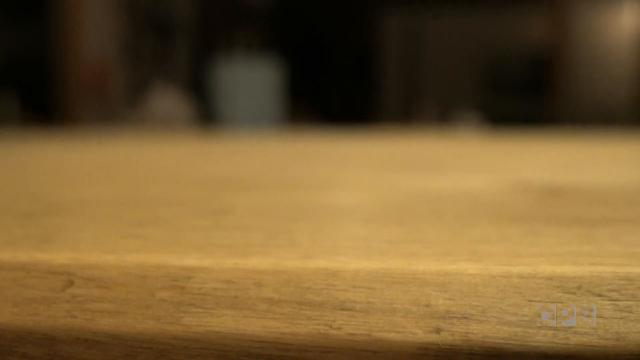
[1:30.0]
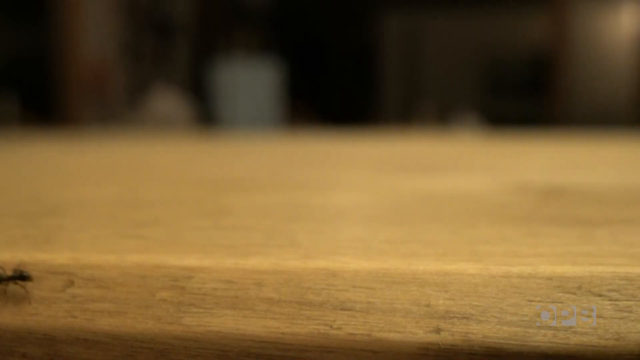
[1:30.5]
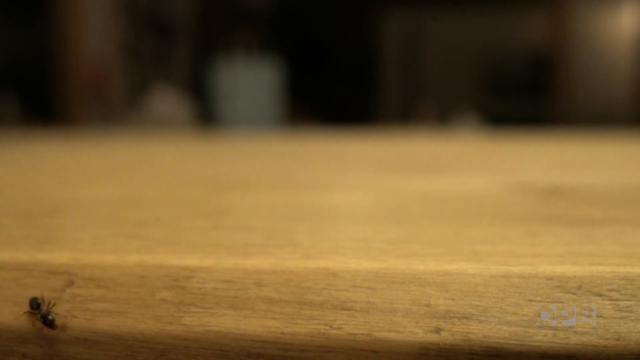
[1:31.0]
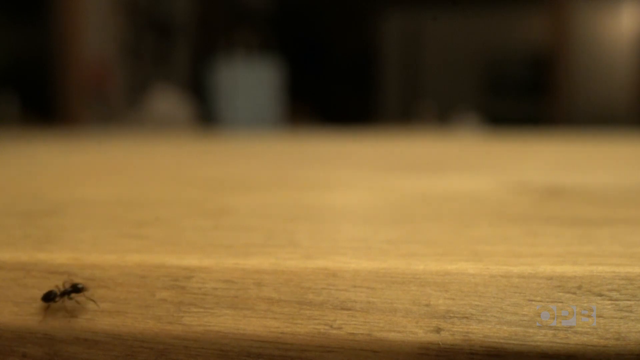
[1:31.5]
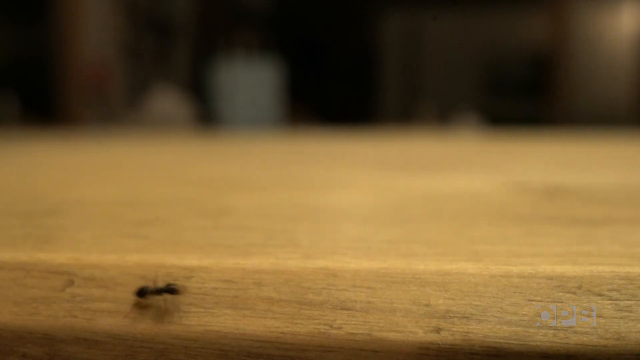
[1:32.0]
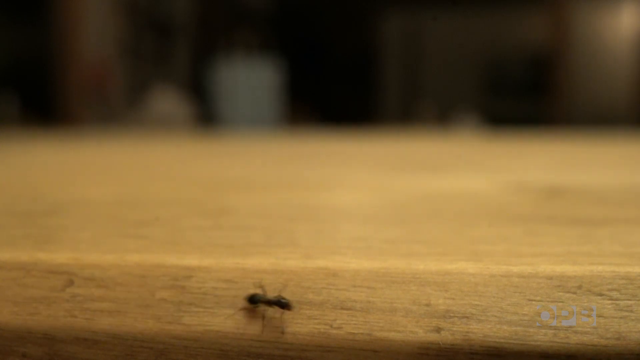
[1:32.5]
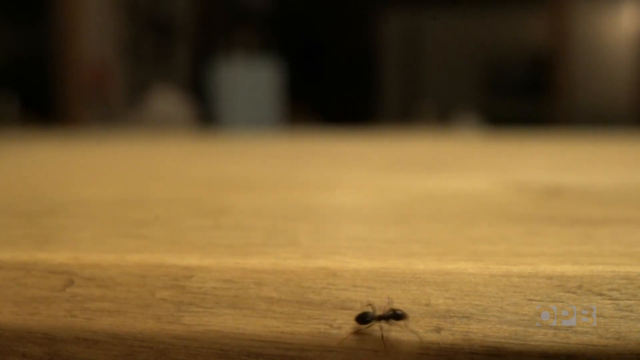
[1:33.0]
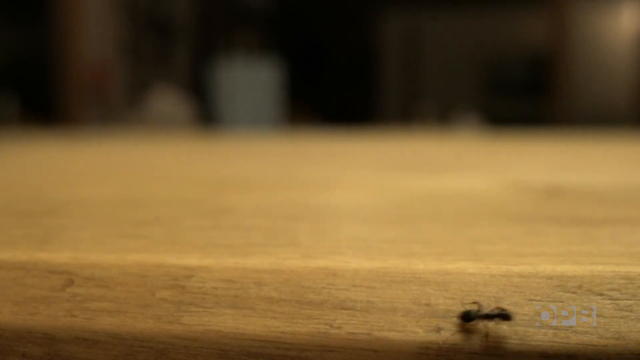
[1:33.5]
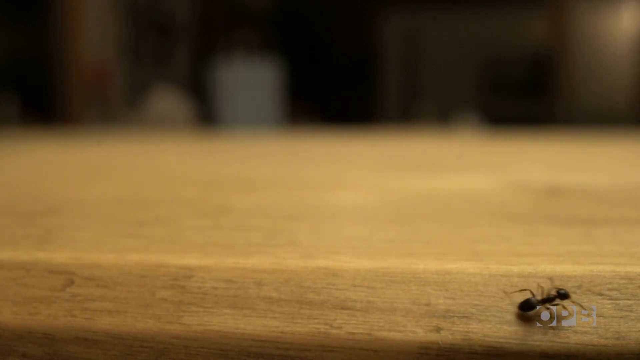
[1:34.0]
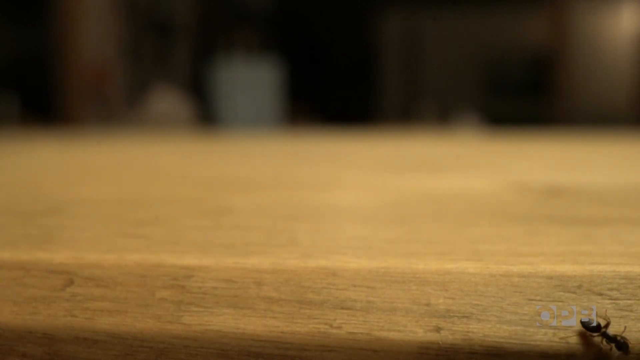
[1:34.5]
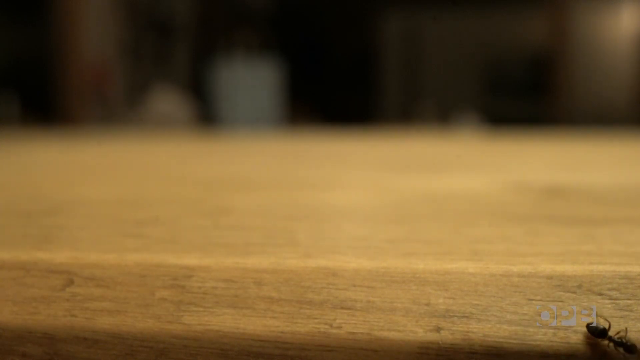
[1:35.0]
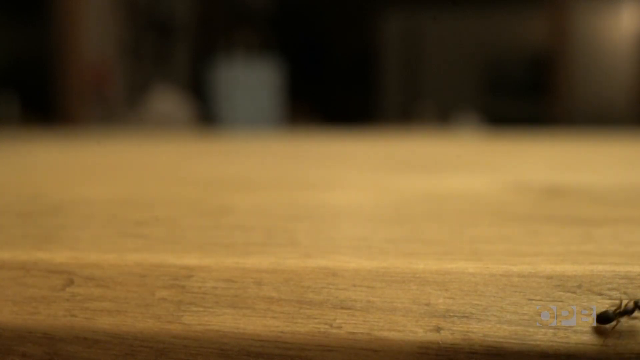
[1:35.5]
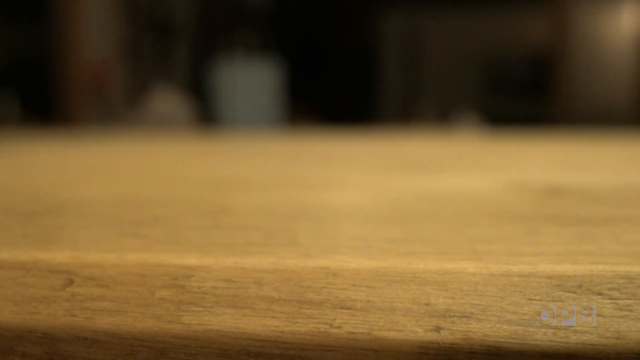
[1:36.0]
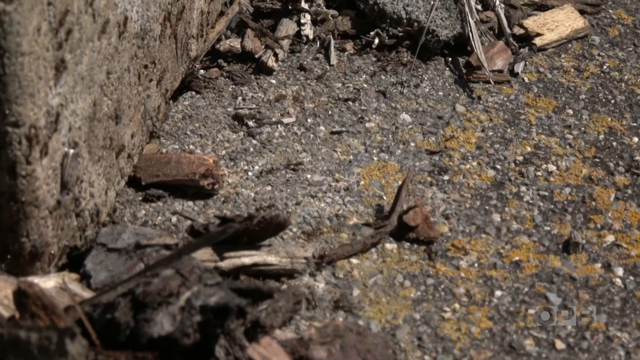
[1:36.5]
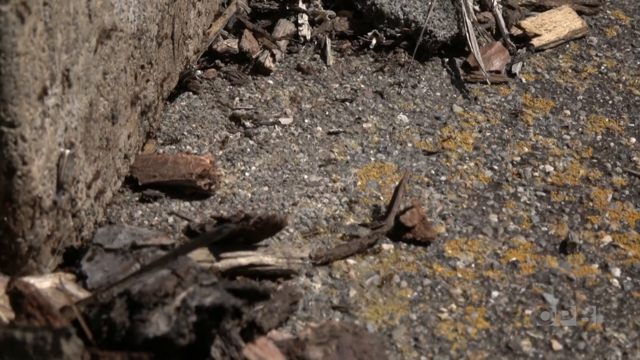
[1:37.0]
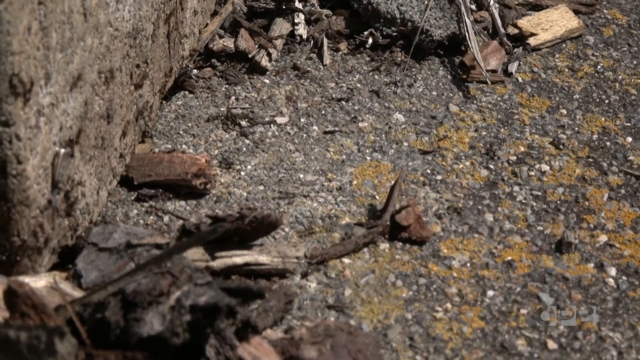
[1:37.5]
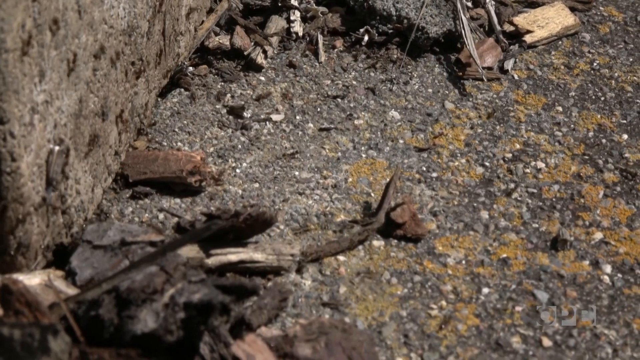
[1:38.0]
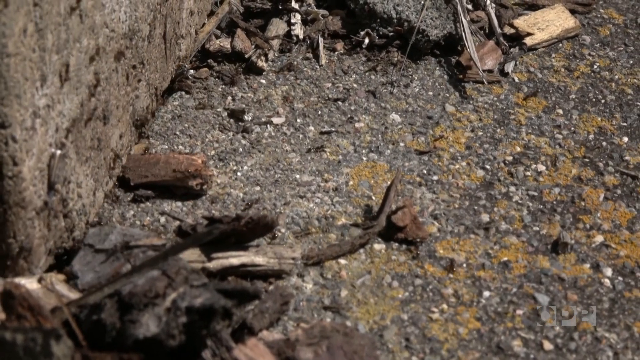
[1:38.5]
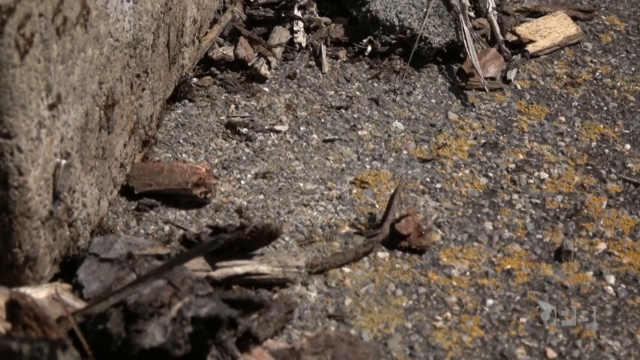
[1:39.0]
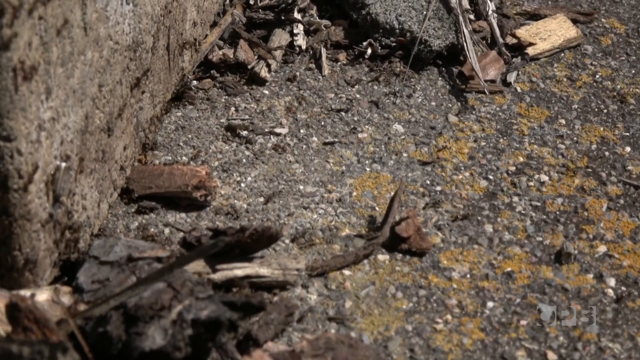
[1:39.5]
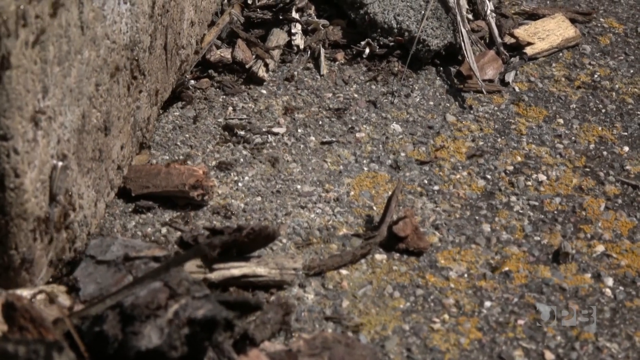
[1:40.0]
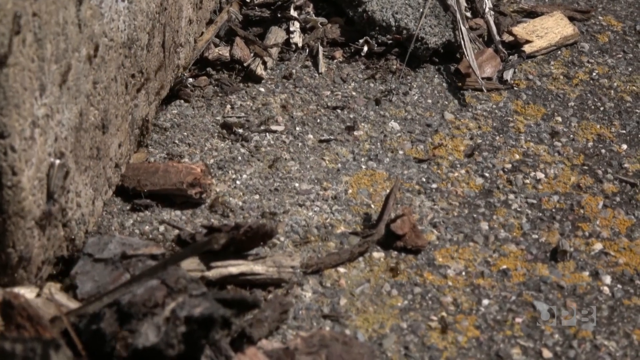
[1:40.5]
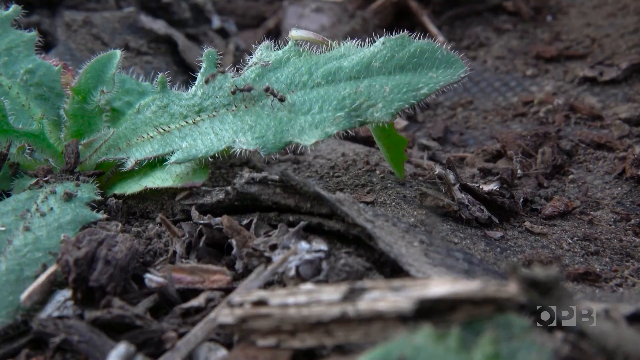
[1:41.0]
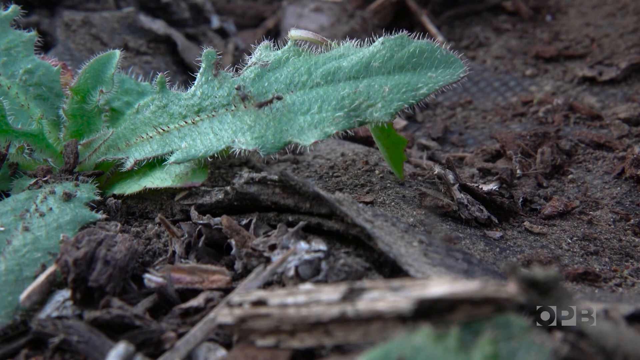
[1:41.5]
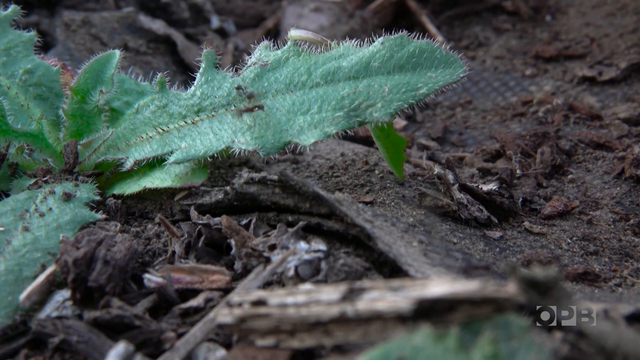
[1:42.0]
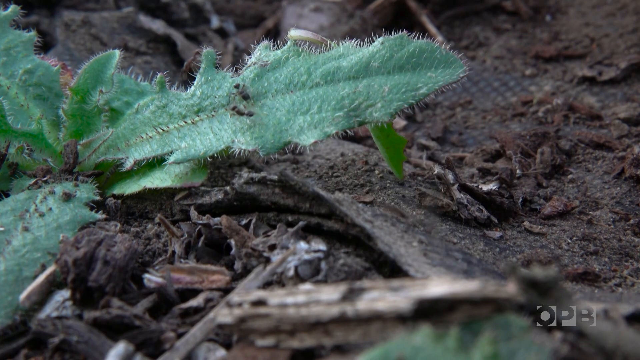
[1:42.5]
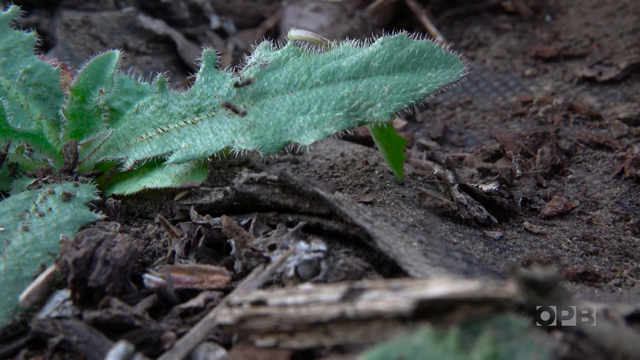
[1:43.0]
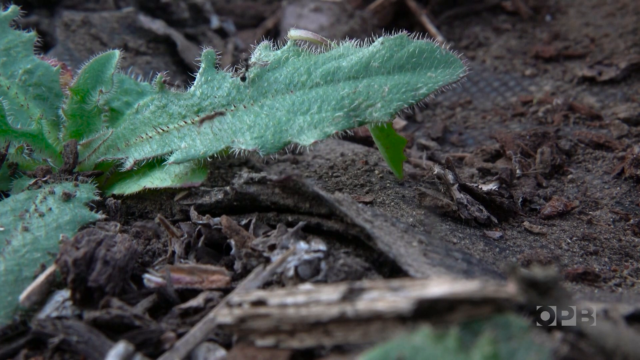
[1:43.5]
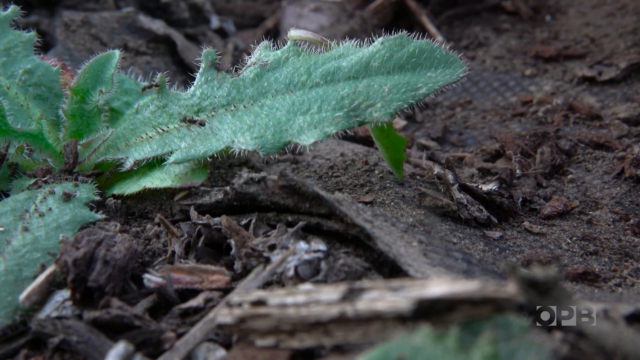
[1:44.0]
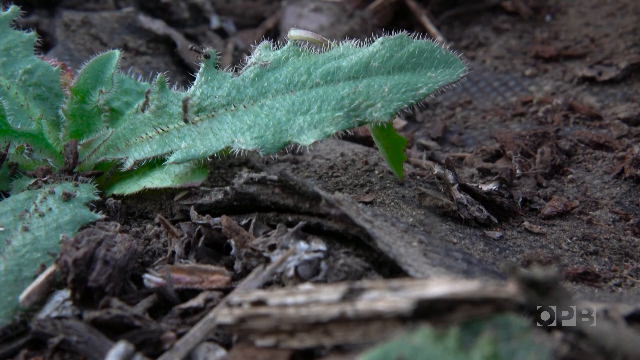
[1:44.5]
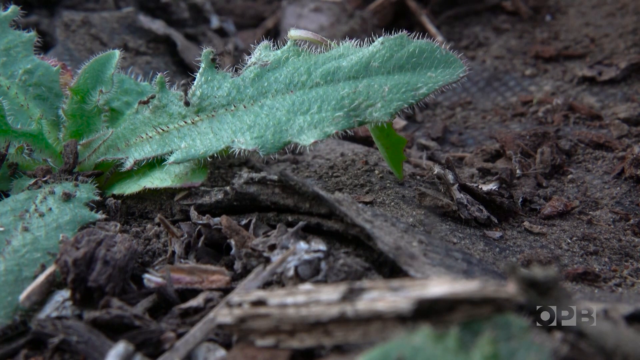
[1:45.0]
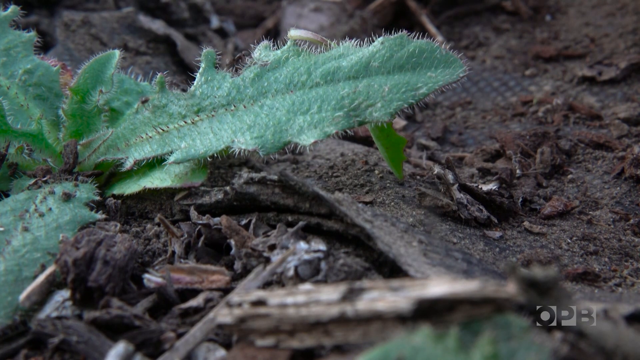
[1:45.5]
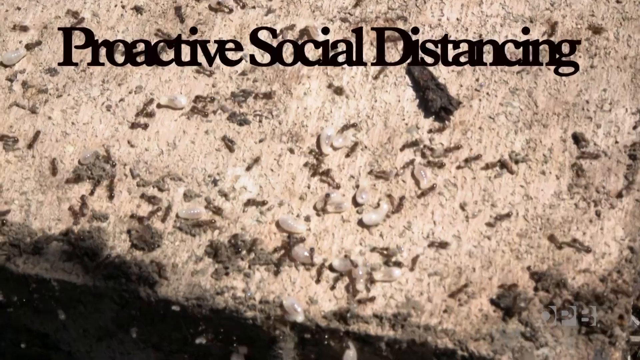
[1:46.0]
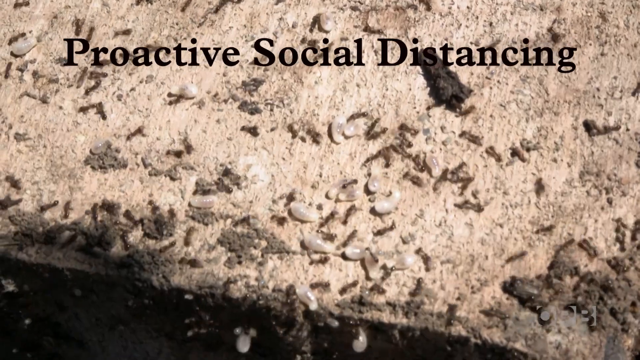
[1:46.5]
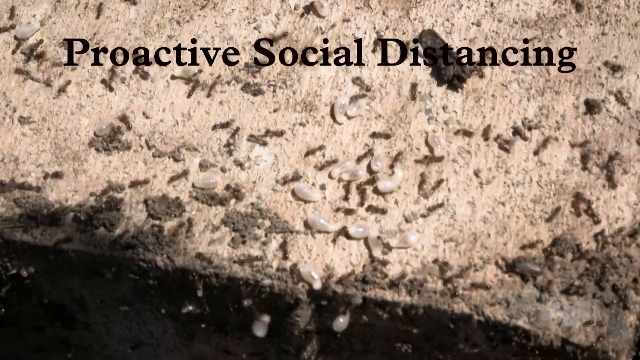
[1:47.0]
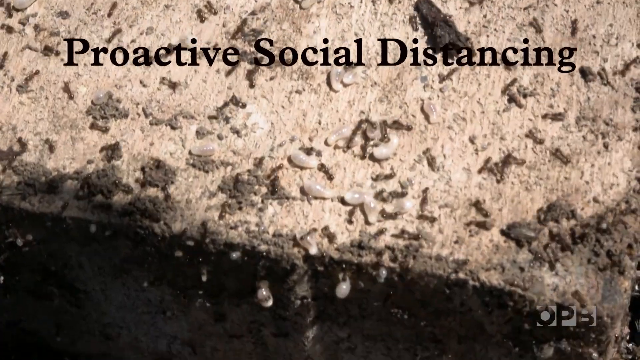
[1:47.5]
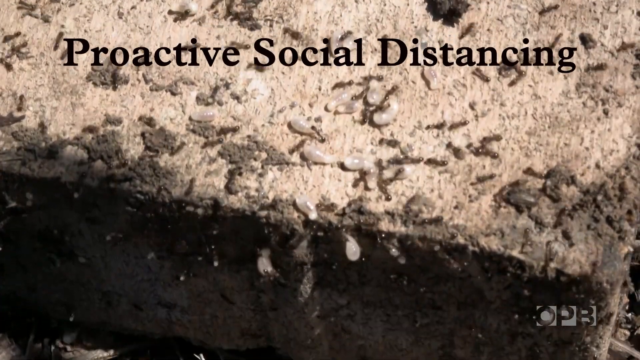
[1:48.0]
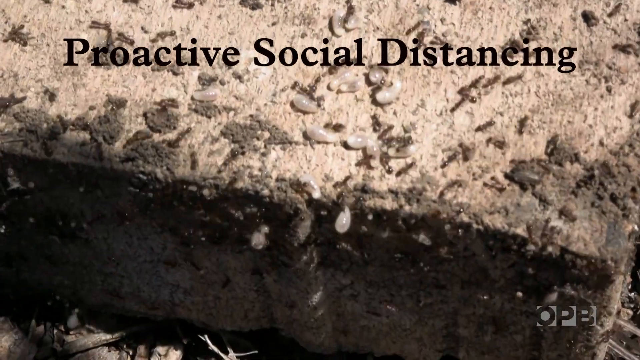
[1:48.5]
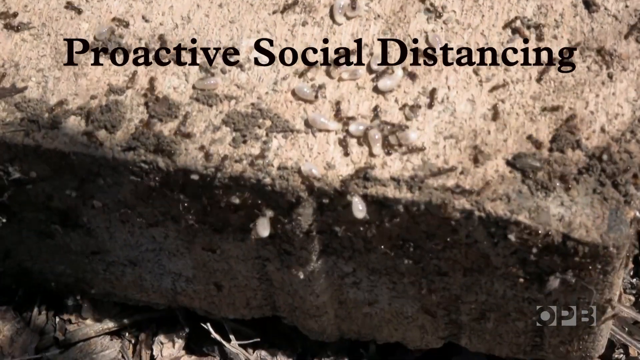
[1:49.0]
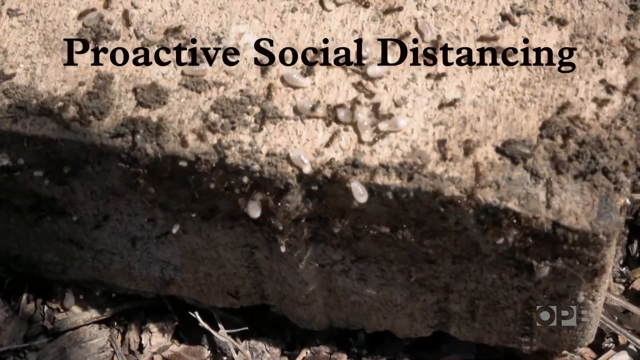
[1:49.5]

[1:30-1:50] A large ant is shown, maybe a carpenter ant or a queen ant. Then a bunch of ants crawl all over the ground, dirt and leaves, running around quickly as if in a hurry. One ant seems to be climbing on a counter by itself, the rest climb on a concrete curb, and some climb on leaves on the ground. The words "proactive social distancing" are on screen. Ants are everywhere, carrying white things.